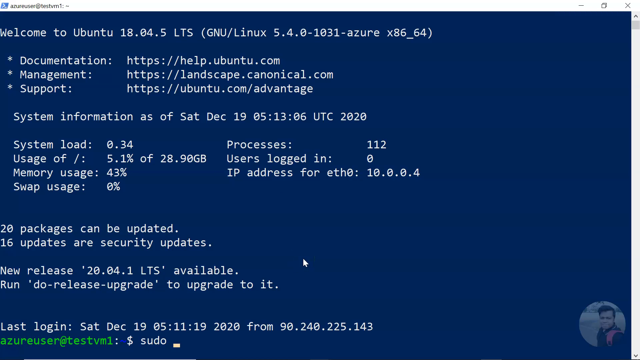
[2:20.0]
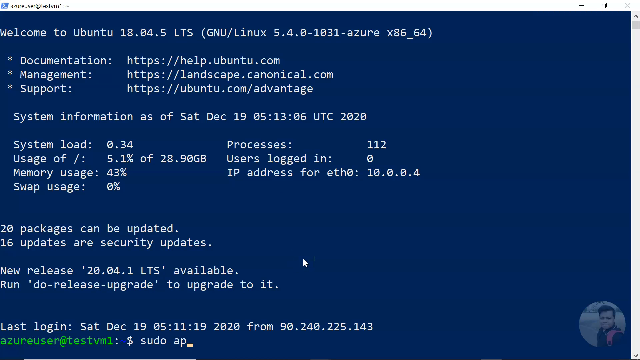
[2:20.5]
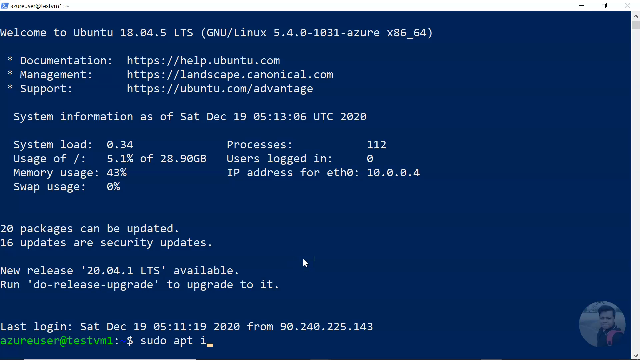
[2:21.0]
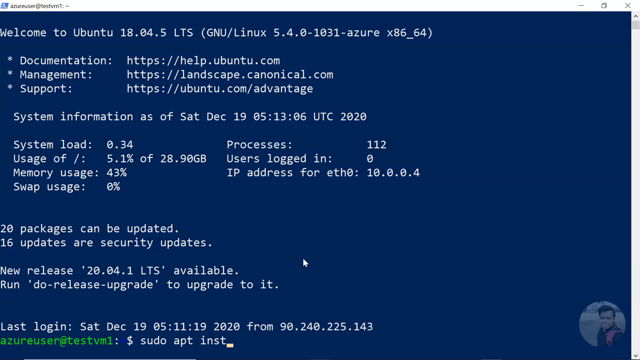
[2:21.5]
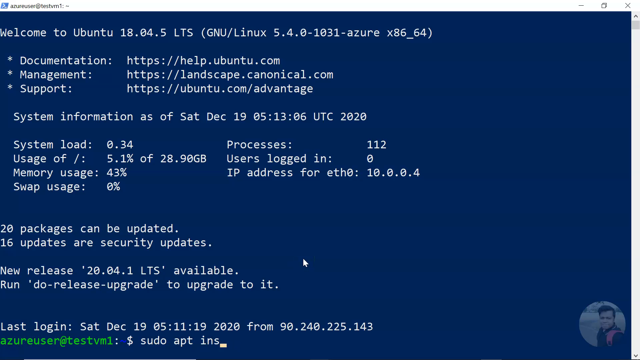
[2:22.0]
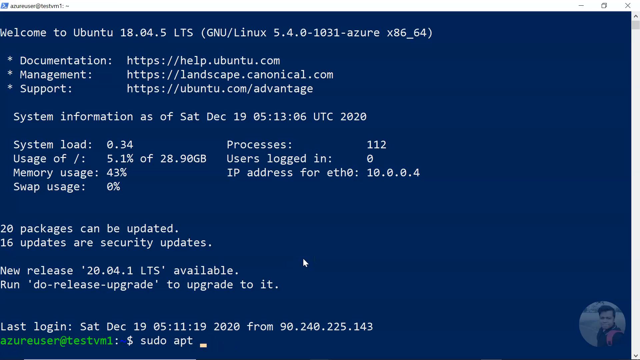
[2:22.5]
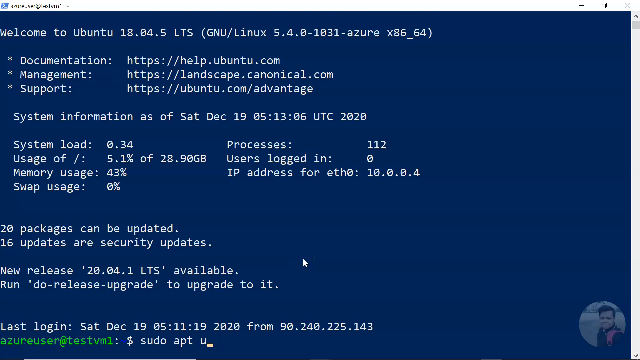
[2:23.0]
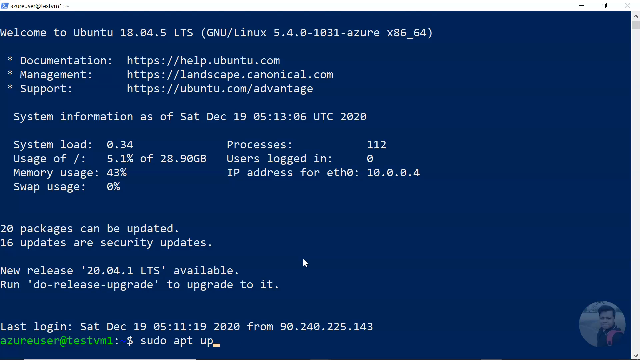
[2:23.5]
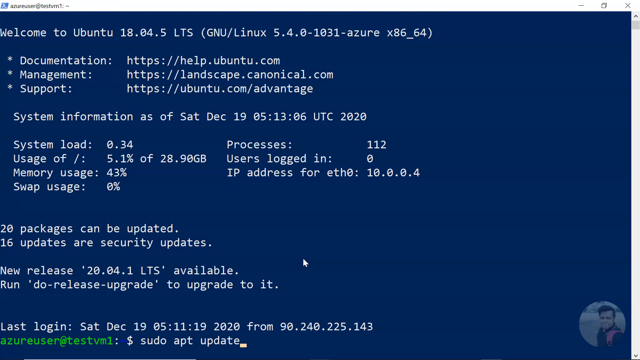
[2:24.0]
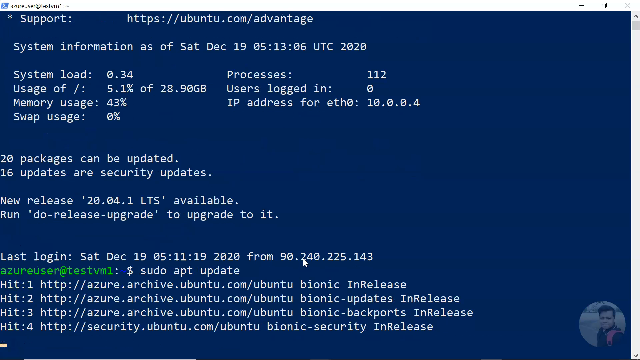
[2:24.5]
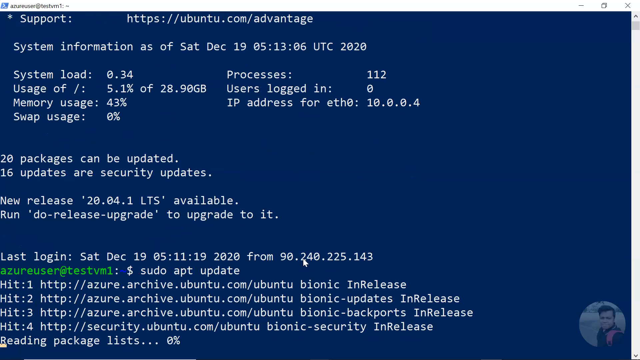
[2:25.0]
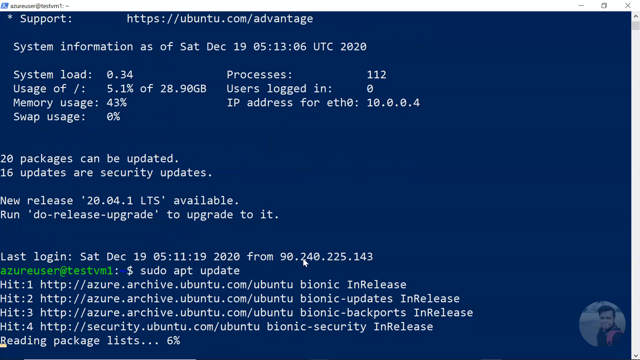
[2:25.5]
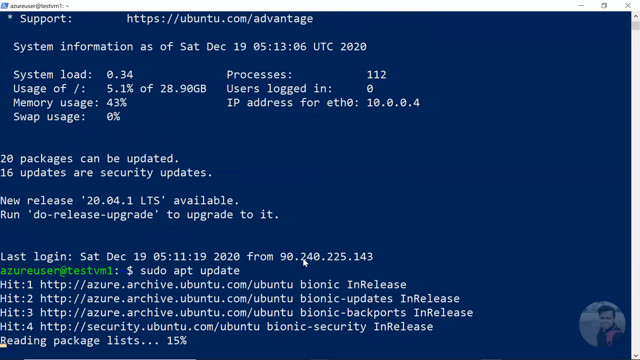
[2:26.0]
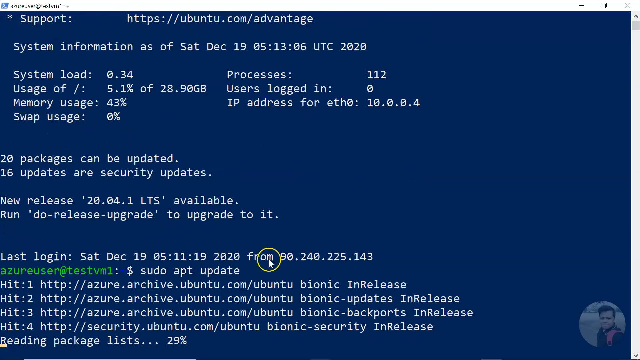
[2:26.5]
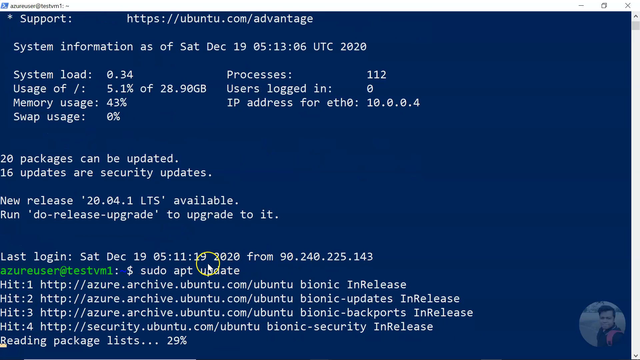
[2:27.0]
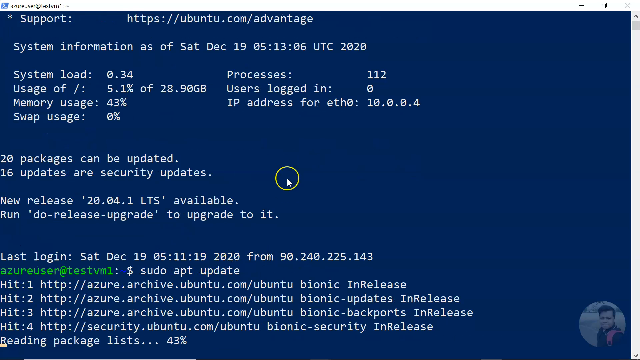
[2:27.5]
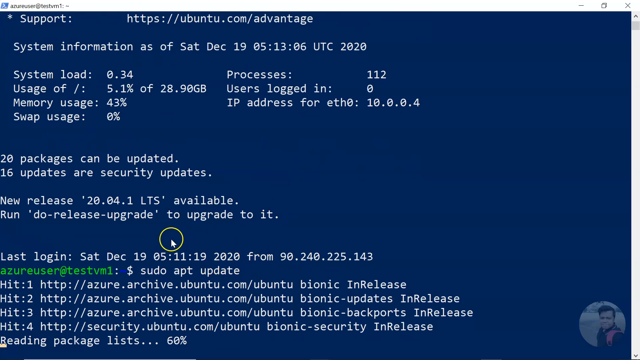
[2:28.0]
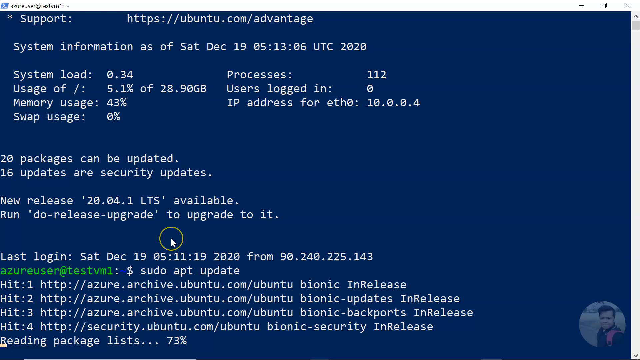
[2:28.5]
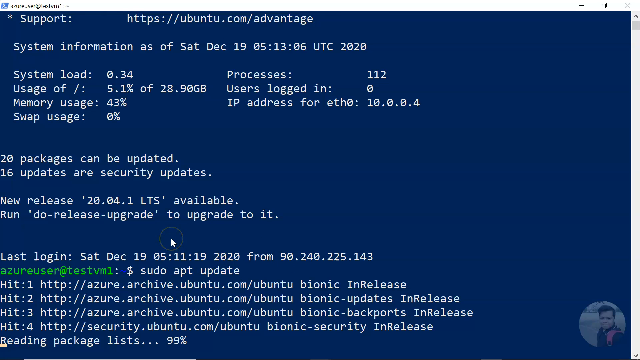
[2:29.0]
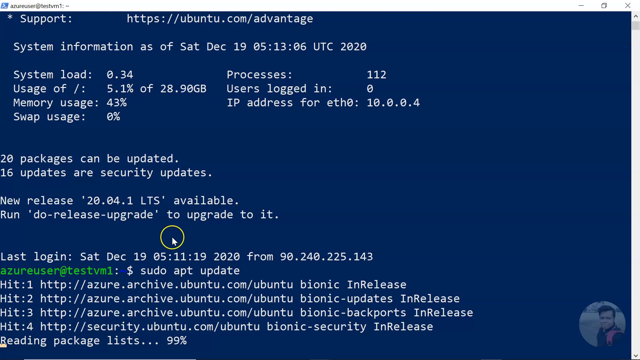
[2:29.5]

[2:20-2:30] A PowerShell window is open with the user logged into the TestVM1 virtual machine. Part of the welcome screen text for Ubuntu 18.04.5 is visible, with documentation links and system information. At the bottom of the screen, the user enters the prompt "sudo apt update" and presses Enter. This brings up several Azure archive Ubuntu links and reads a package list, with a percentage going up as it finishes. It loads relatively quickly, and once done it reads "Reading package lists... done".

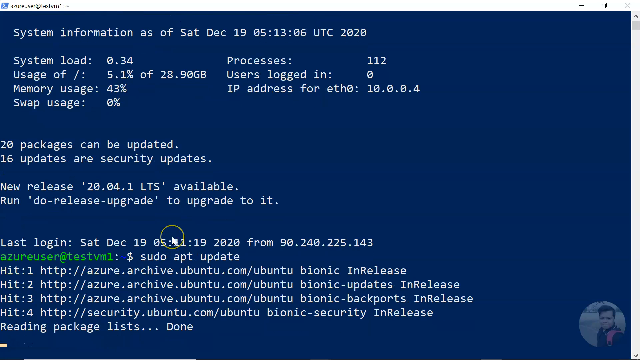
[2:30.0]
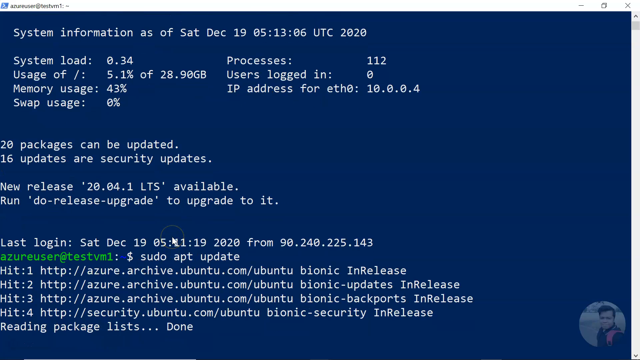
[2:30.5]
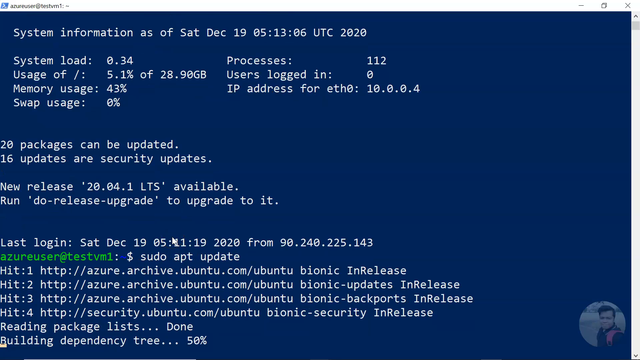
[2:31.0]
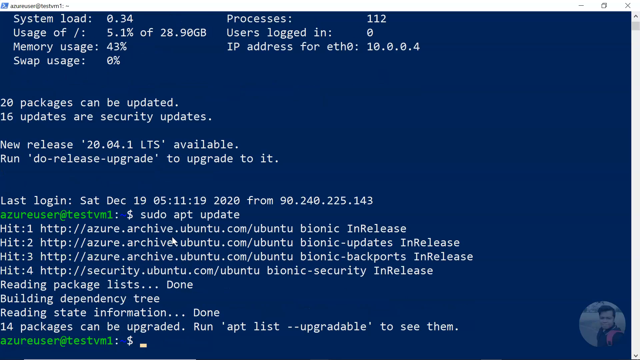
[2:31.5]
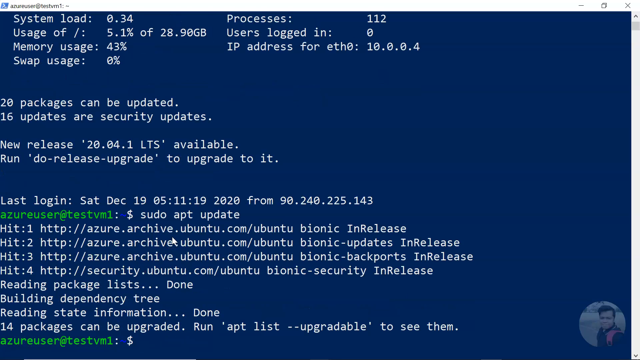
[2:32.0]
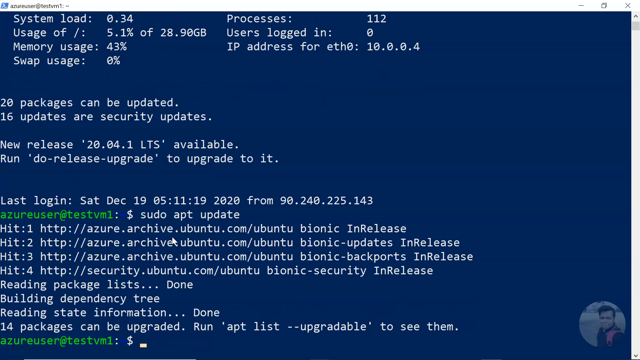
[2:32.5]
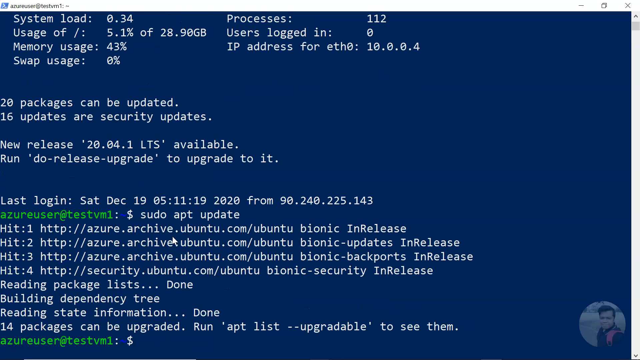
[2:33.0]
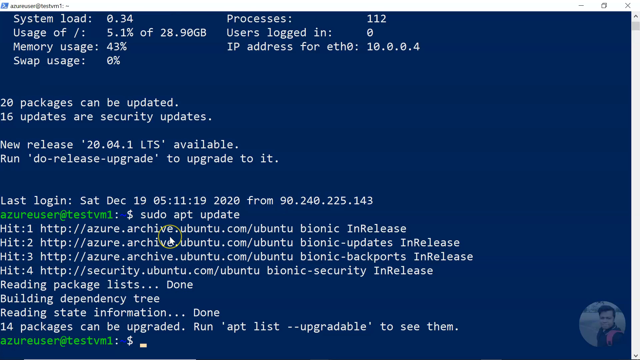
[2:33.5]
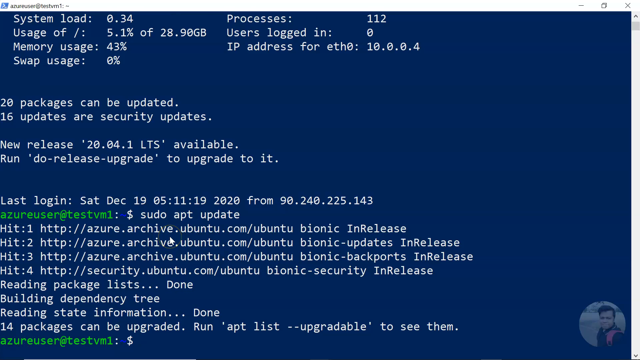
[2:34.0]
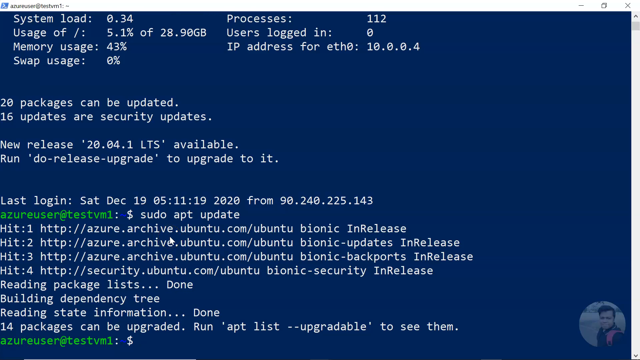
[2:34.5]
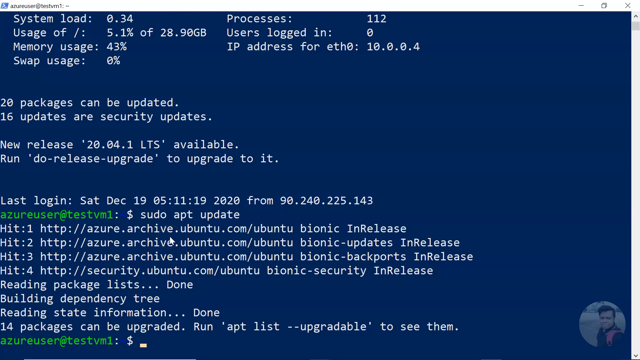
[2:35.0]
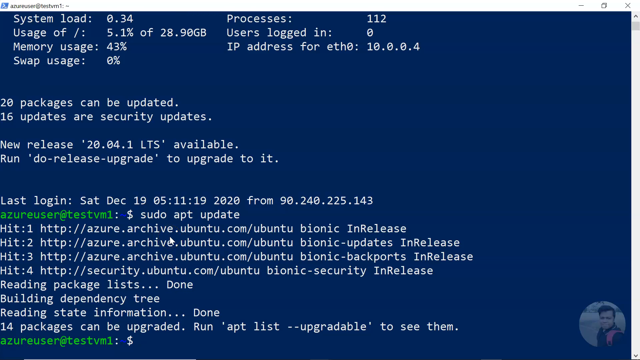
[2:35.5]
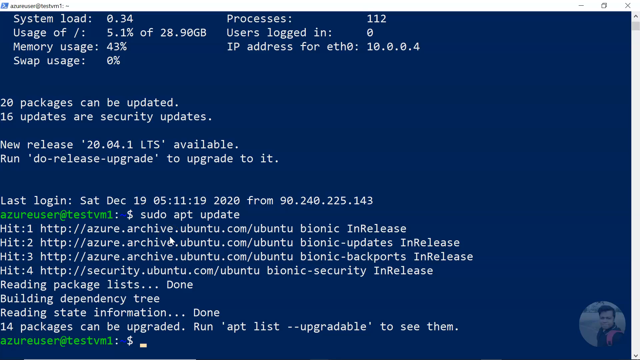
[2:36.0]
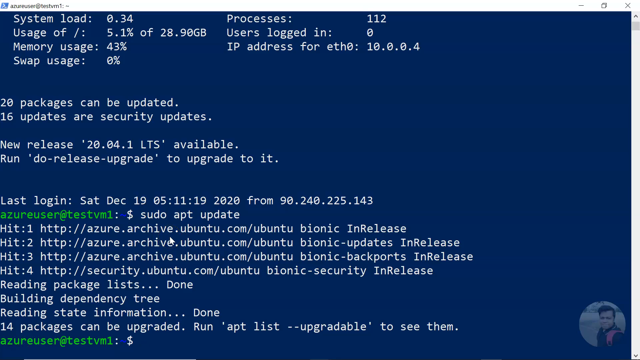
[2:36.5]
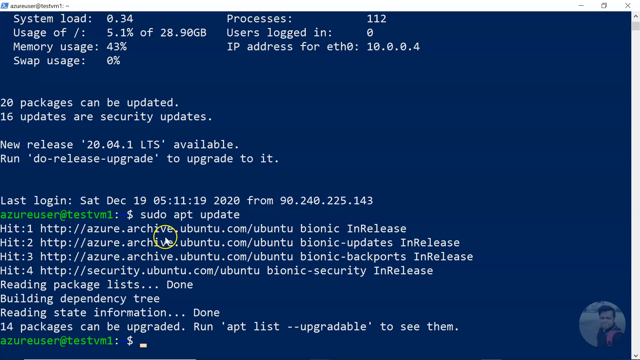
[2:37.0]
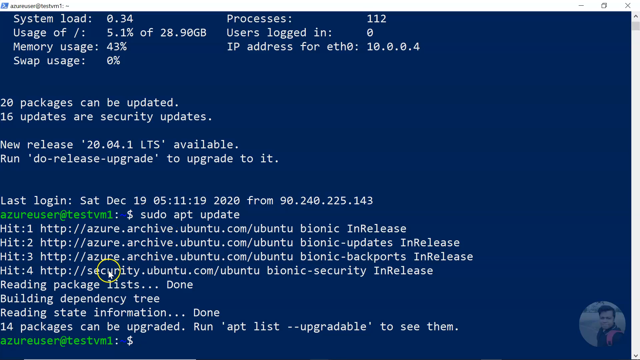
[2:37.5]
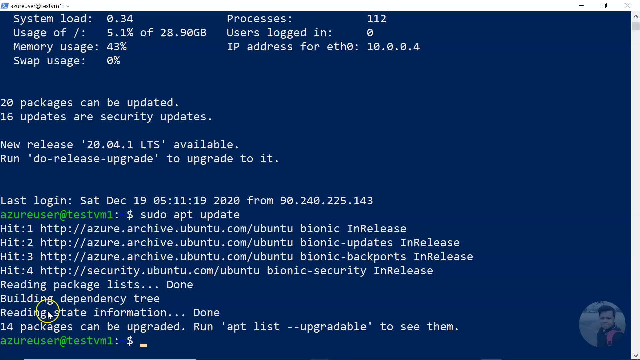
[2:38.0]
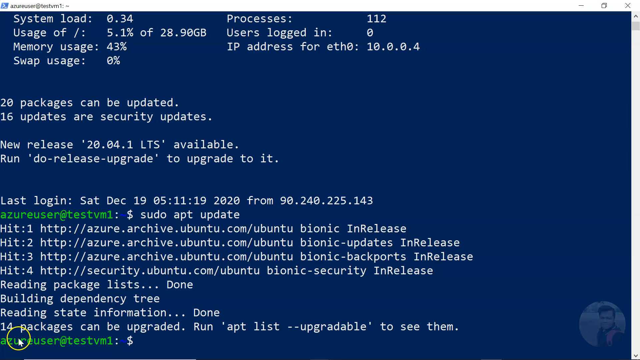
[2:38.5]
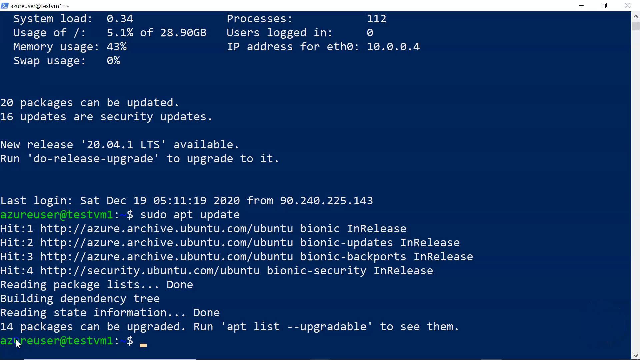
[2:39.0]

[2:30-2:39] A black Windows PowerShell window fills the full screen, with the user logged into the Azure user Test VM1 virtual machine account. After the previous "sudo apt update" prompt and its list of package links, once the package list finishes reading, the text reads "Building dependency tree", and then "Reading state information... done". Underneath, the result reads "four packages can be upgraded. Run apt list --upgradable to see them." The next line is empty apart from the user's account name, a colon, a dollar sign and a space for the next prompt, where the cursor blinks.